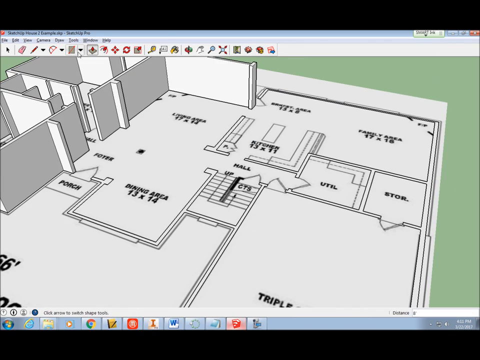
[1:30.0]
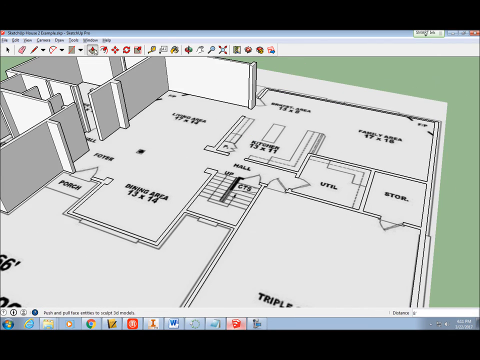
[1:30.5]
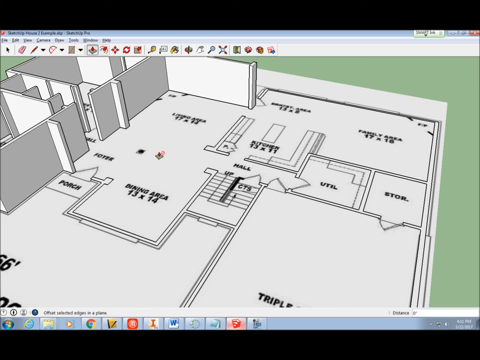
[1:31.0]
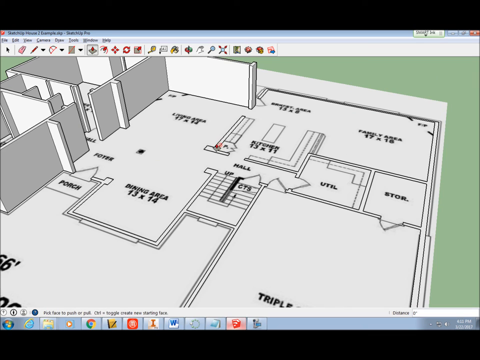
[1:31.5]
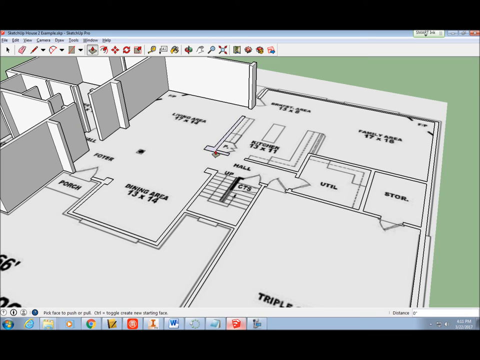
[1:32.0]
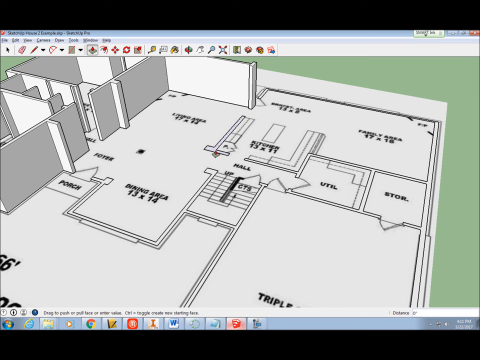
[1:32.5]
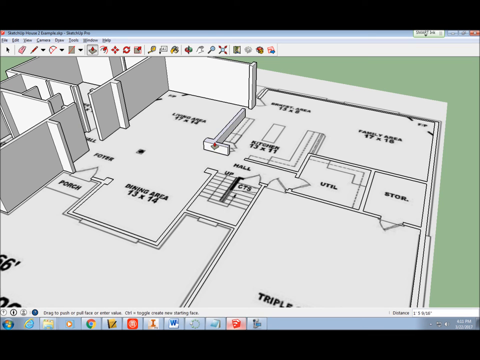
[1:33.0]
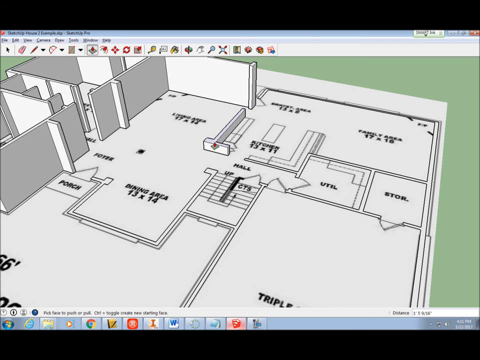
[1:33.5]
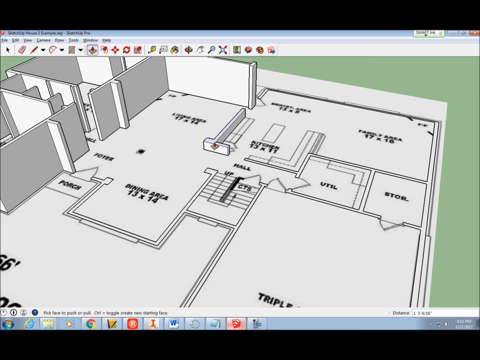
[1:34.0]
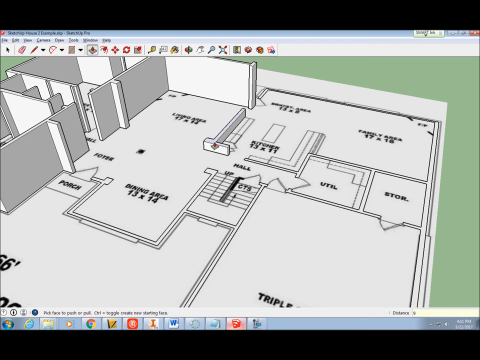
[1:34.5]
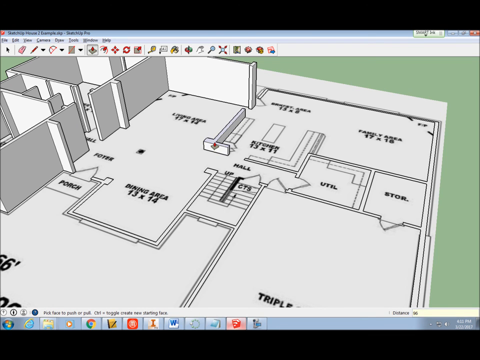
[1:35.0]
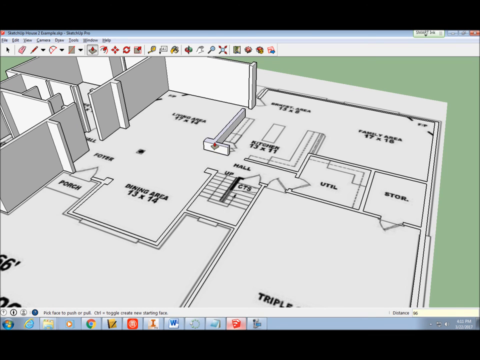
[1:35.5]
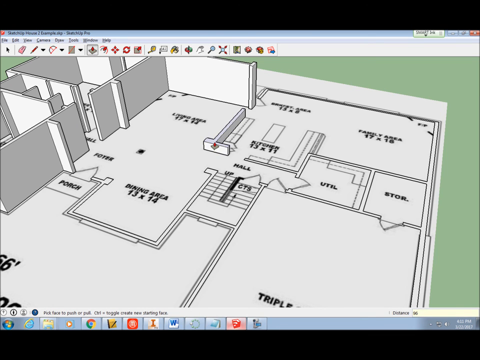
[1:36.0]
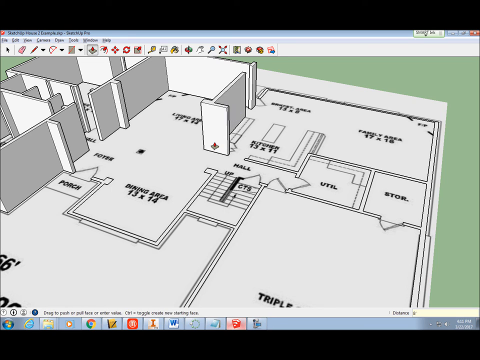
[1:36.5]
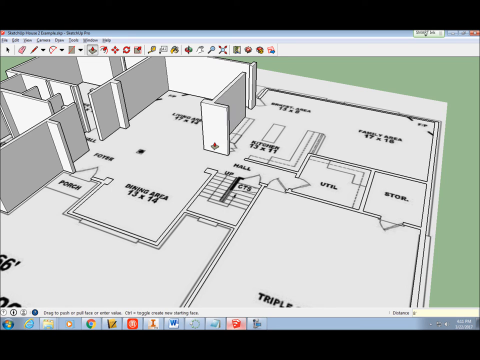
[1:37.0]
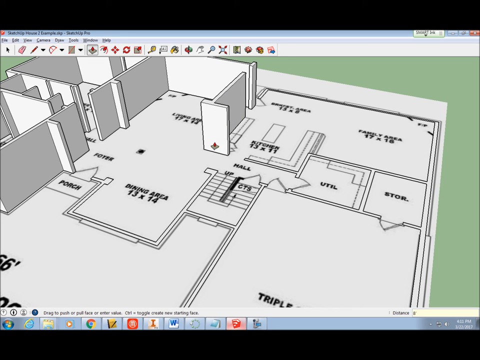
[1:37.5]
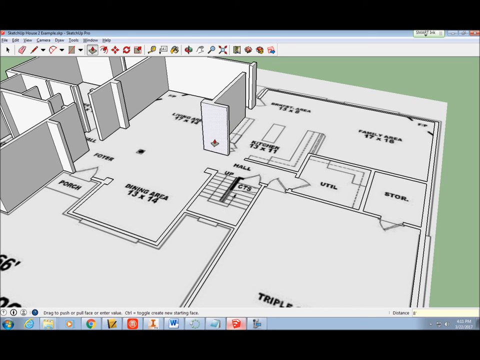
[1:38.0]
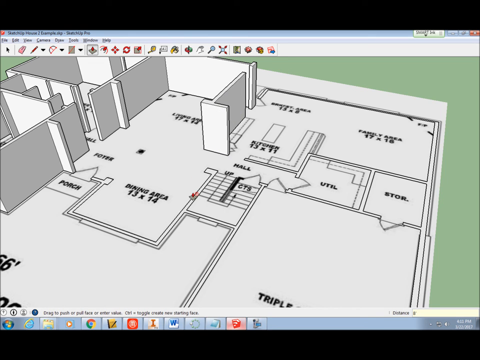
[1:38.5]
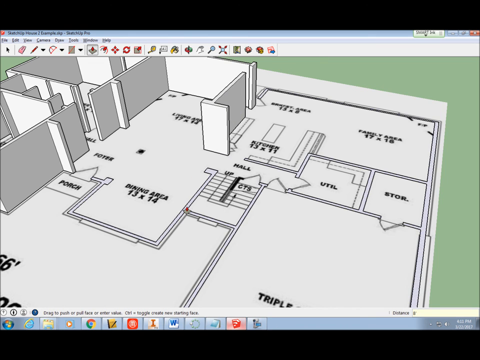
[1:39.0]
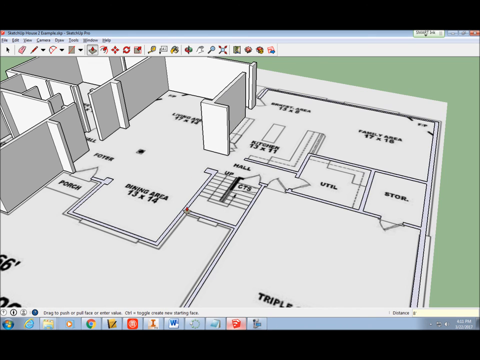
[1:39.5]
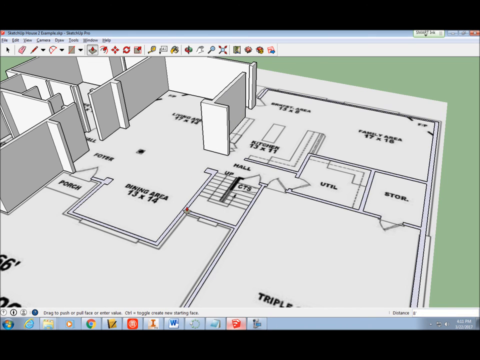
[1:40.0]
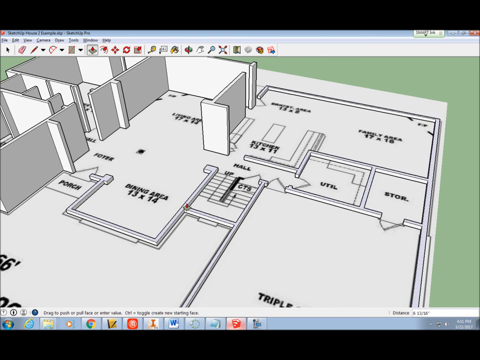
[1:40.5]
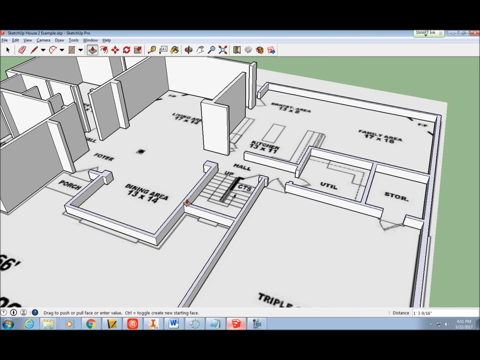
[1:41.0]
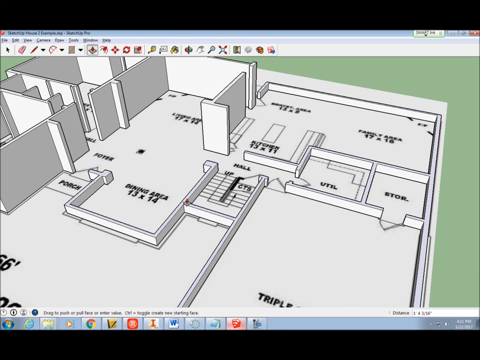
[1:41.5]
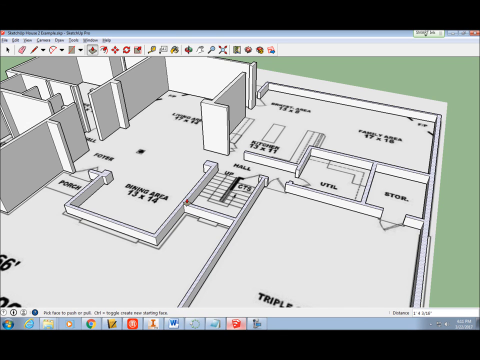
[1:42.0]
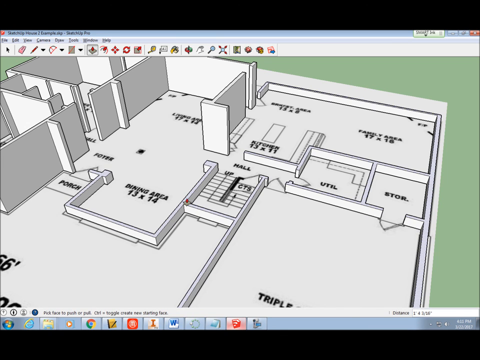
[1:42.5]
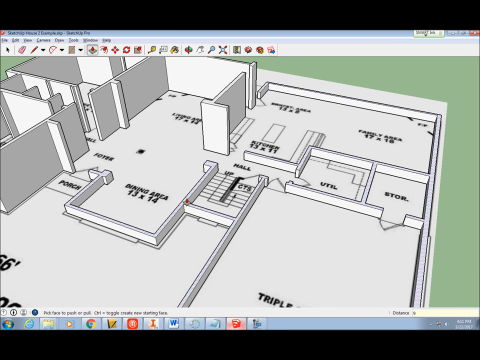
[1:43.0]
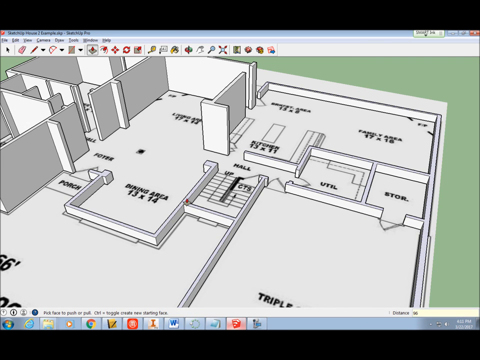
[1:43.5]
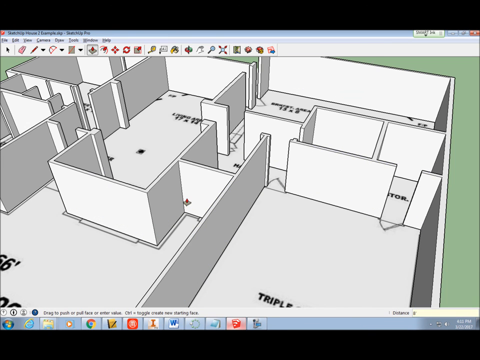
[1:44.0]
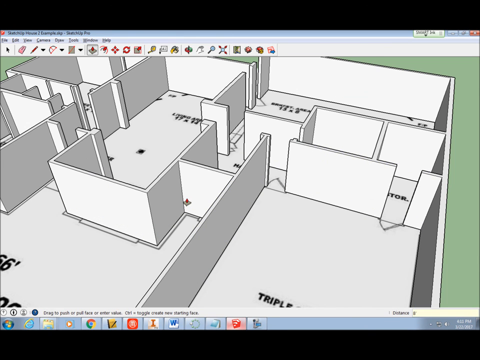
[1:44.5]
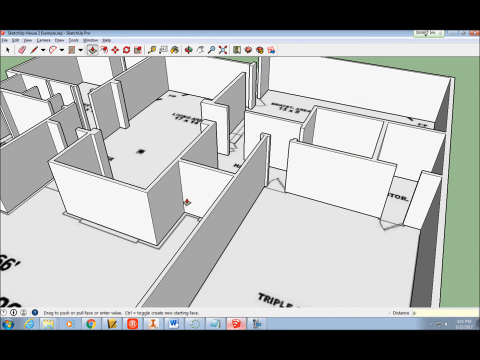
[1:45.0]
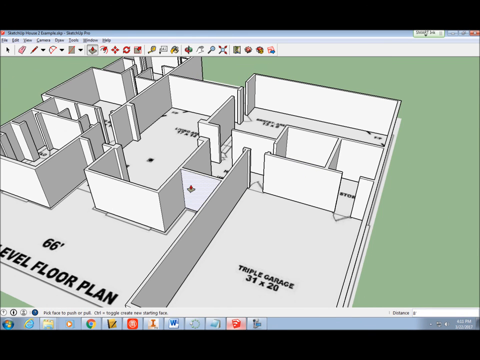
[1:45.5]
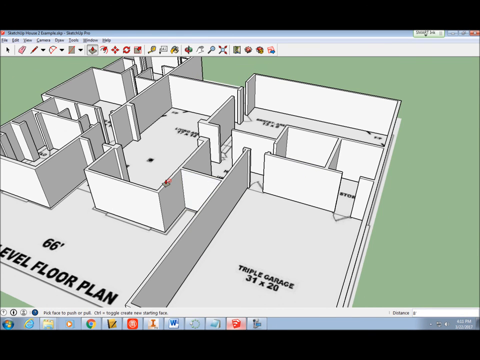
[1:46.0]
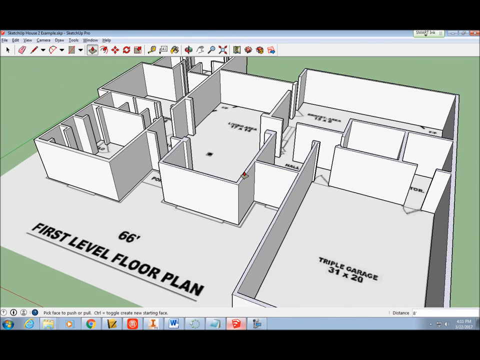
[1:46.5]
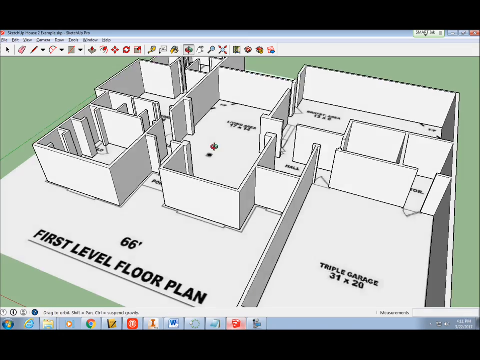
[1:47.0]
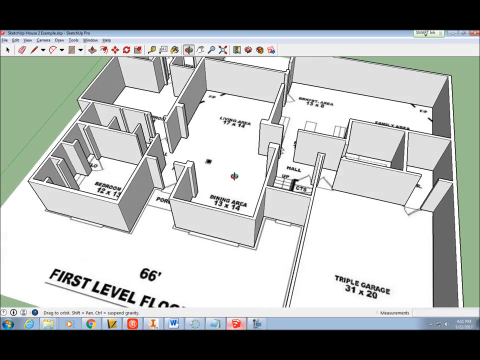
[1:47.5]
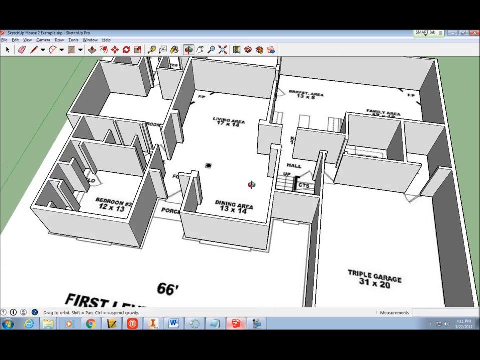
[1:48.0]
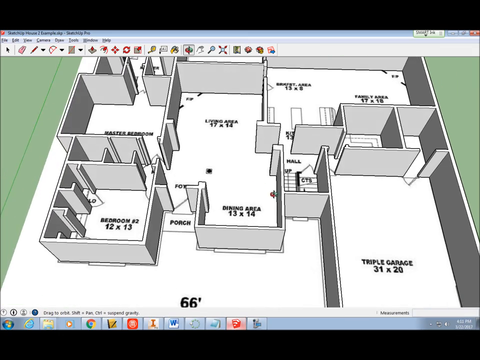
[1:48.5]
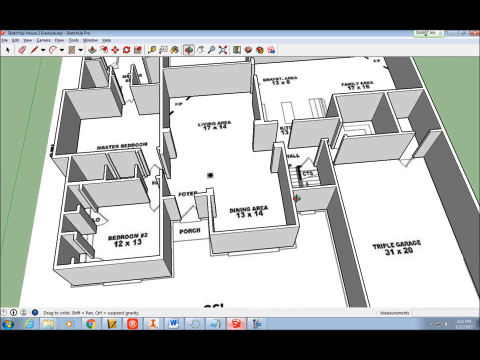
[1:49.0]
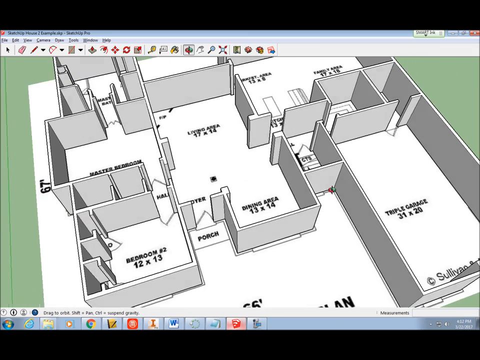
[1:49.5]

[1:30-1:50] A wall is being built around the left side of the kitchen, where there may be a small cabinet, stove or oven placed on that wall. It emerges from just lines and is built up into an actual wall. The view then moves toward the dining room wall that connects to the garage and the other walls of the house: a triple garage, a breakfast area, a family area, a utility closet, a storage closet, a dining area, a living area and a hallway. All these interconnected walls are raised up to the same level at the same time. The view, which was at a slight angle just off 90 degrees, kind of tilts back to a straight-on view, then zooms out from the walls to a bird's-eye view farther away, ending on the other side of the house.